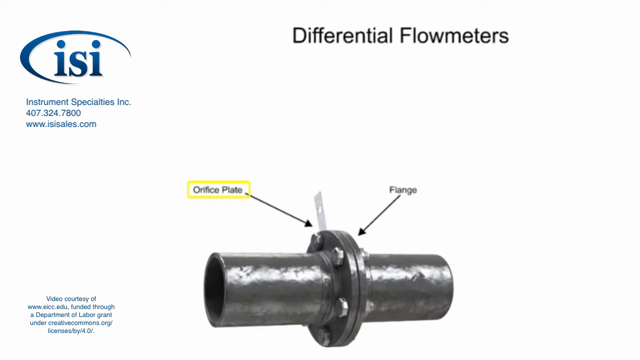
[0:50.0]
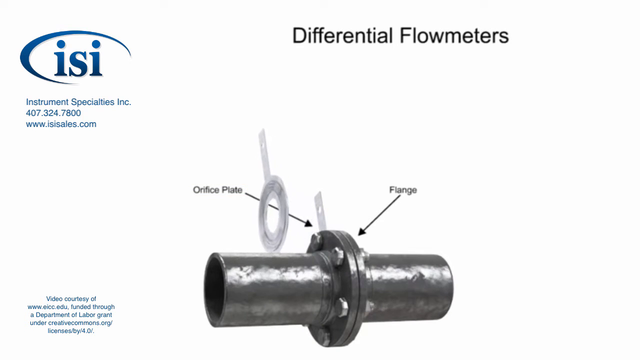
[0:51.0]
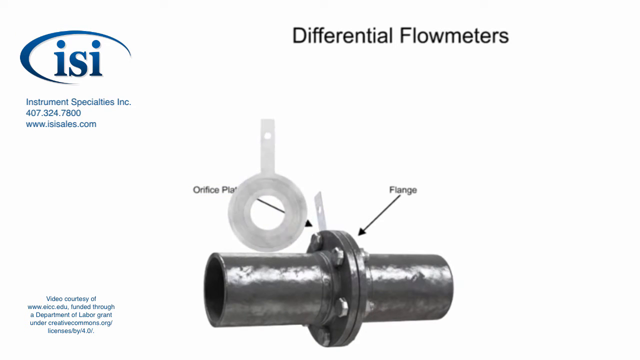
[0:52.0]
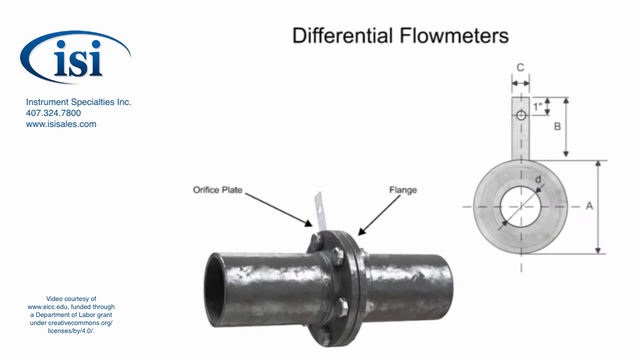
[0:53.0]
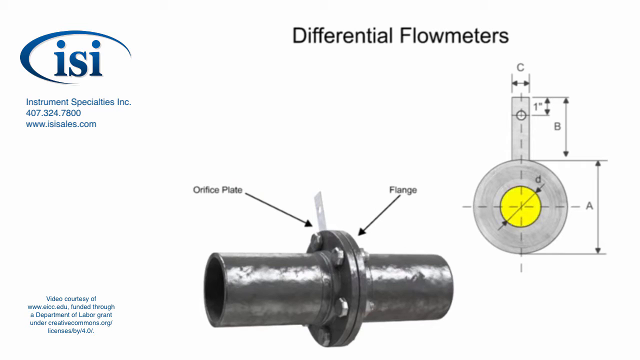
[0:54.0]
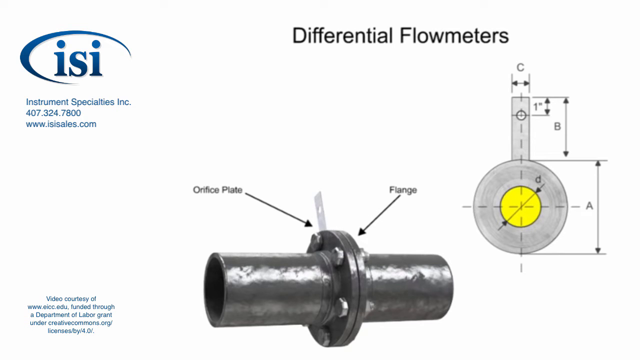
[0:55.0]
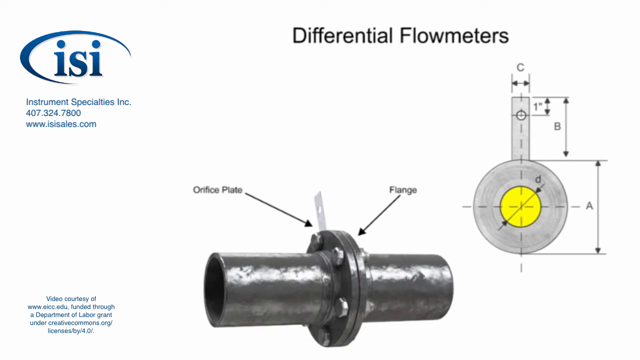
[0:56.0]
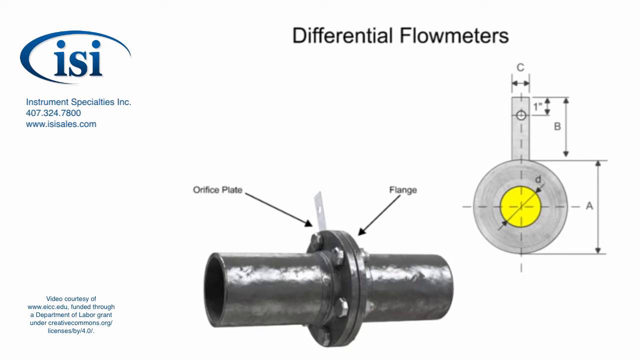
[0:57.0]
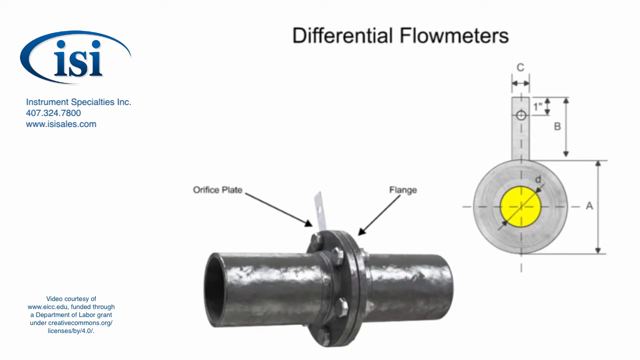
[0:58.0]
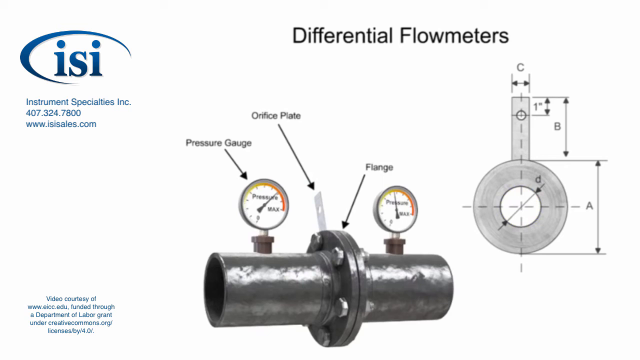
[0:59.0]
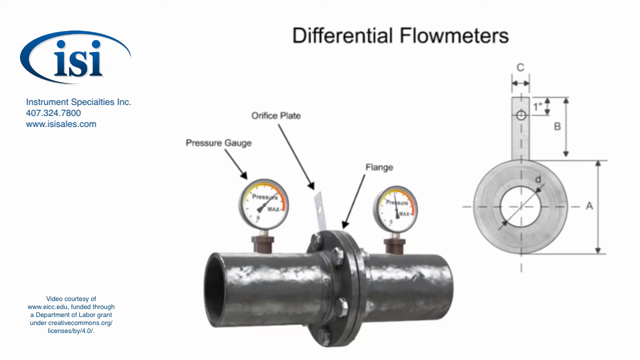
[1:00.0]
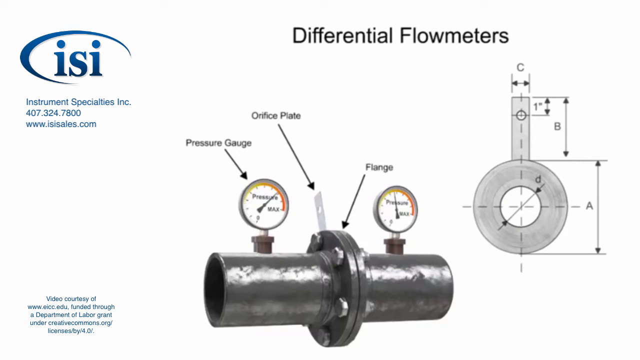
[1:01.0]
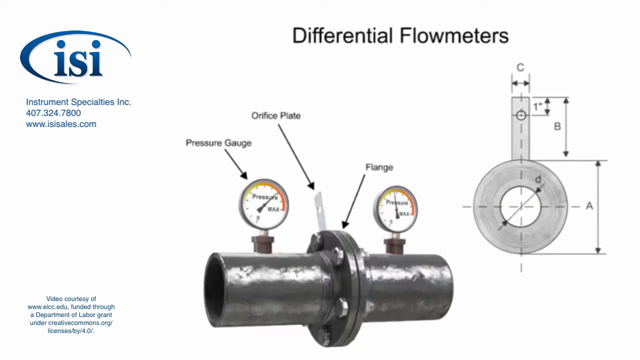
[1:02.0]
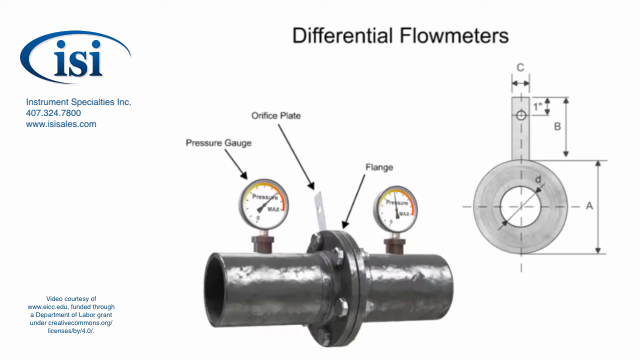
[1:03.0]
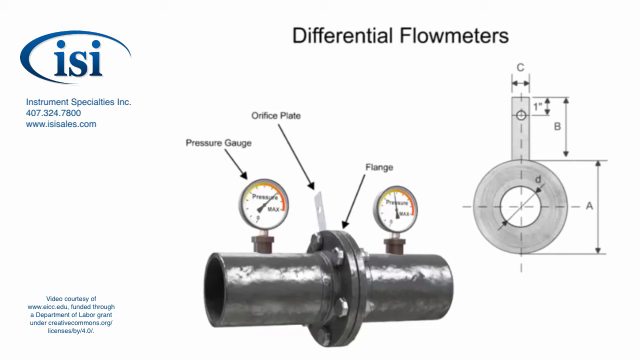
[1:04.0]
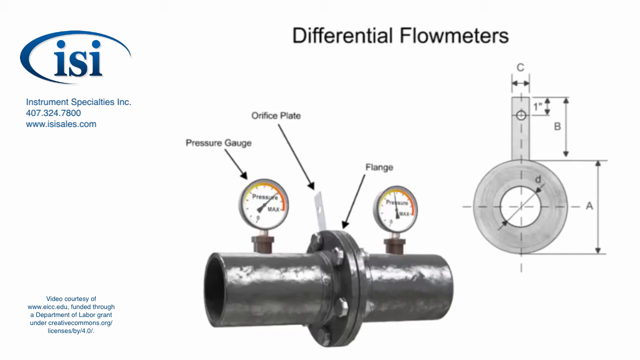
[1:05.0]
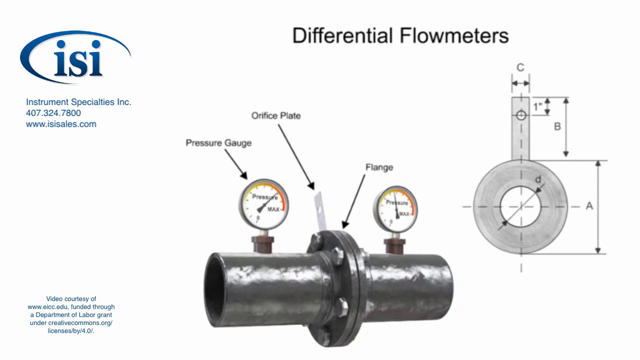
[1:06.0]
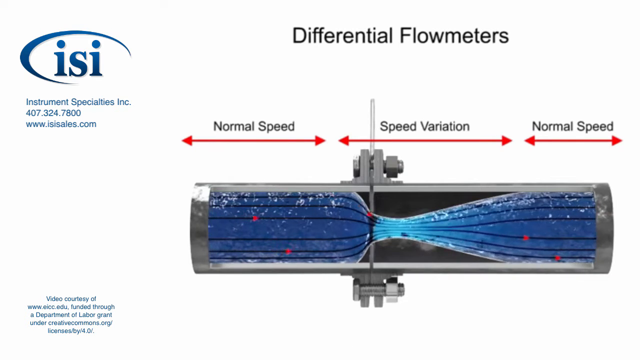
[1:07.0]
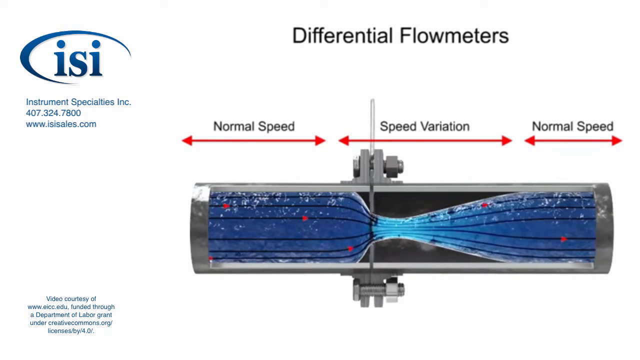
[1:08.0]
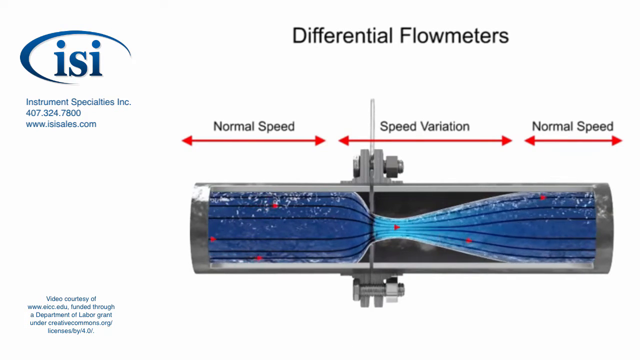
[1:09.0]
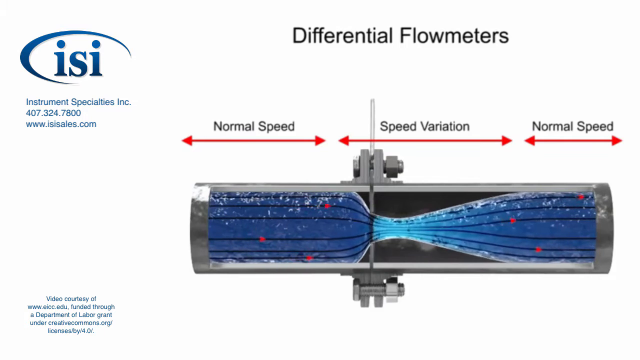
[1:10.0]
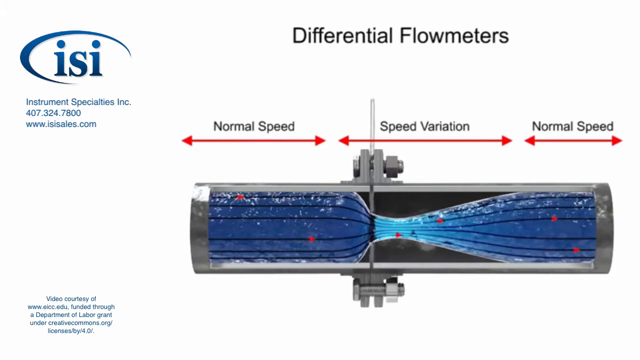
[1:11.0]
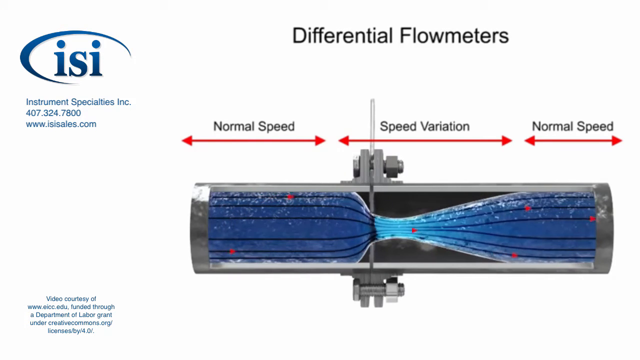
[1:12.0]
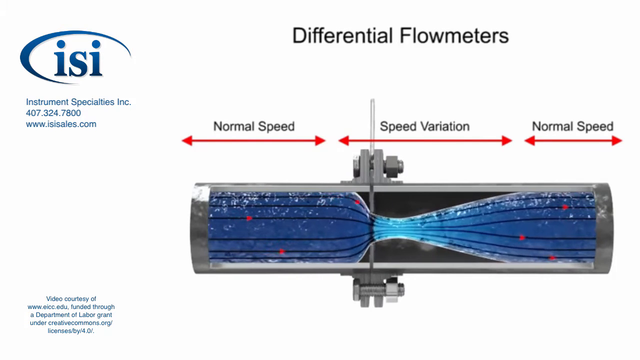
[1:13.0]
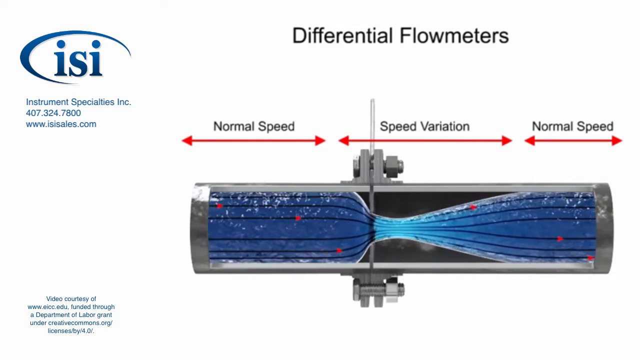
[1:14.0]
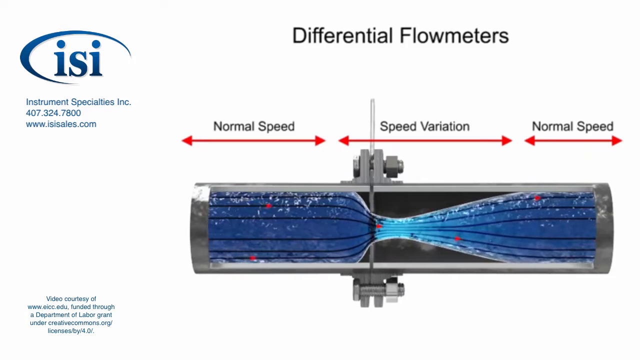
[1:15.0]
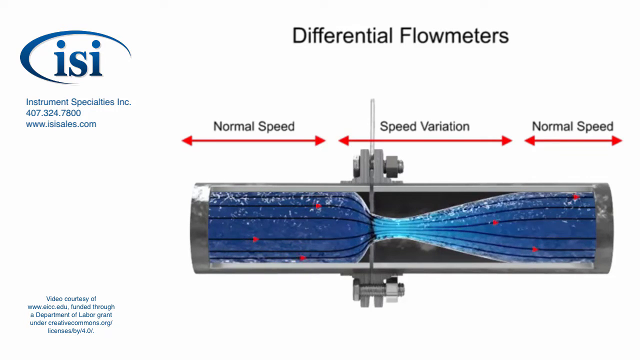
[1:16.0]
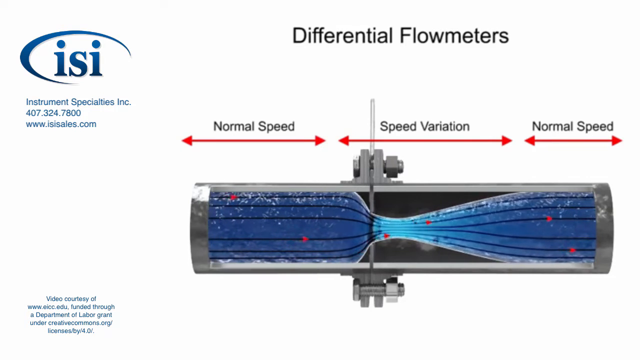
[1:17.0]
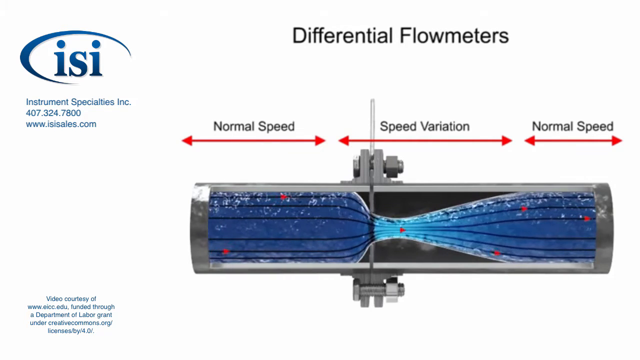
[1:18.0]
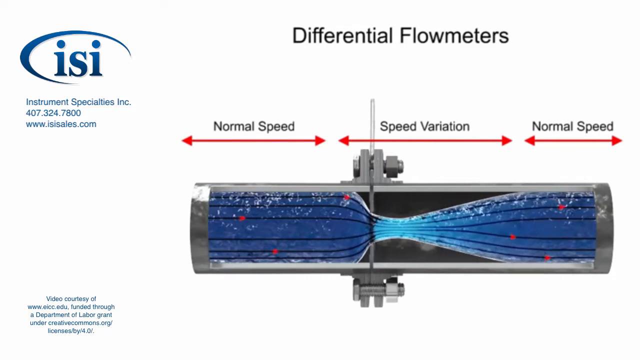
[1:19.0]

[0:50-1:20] Two pipes are shown being clamped together, with something like a white tag sticking out. The words "orifice plate" appear with an arrow pointing to the tag sticking out, and the word "flange" appears with an arrow pointing to the flat lips that are clamped together. "Orifice plate" is surrounded by a yellow rectangle. Then the orifice plate comes out, spins around, and moves to the right side of the screen. A diagram with C, B, and A on it appears, with a lot of right angles and a line; it looks like a cross going across the orifice plate. The orifice plate is circular. Then pressure gauges show up, with the words "pressure gauge" and an arrow pointing to the pressure gauge on the left. At the top it says "differential flow meters". Then an animation shows a pipe with its side cut away and water flowing through it; it sort of looks like an hourglass in the middle. At the top it says "normal speed", "speed variation", and "normal speed". Underneath each of these words is a yellow arrow pointing to both sides of the screen, and red dots flow through the pipe, showing that the water speeds up as it narrows at the center of the pipe.